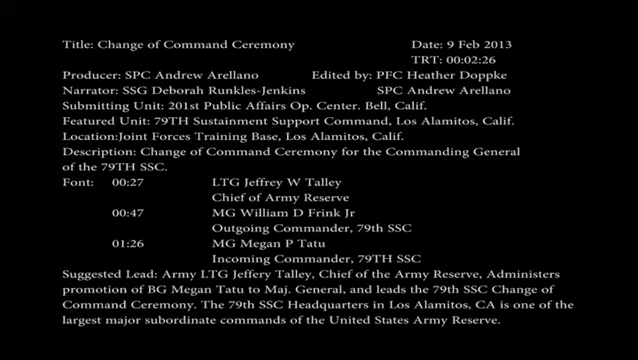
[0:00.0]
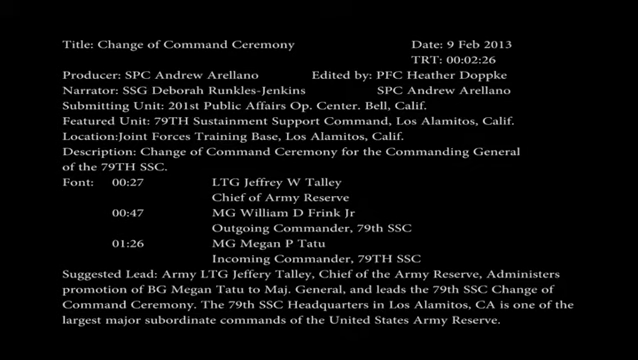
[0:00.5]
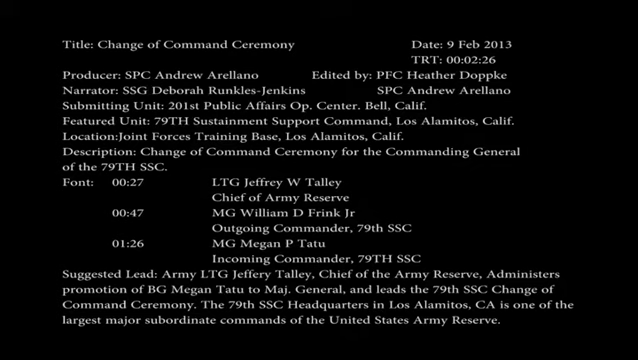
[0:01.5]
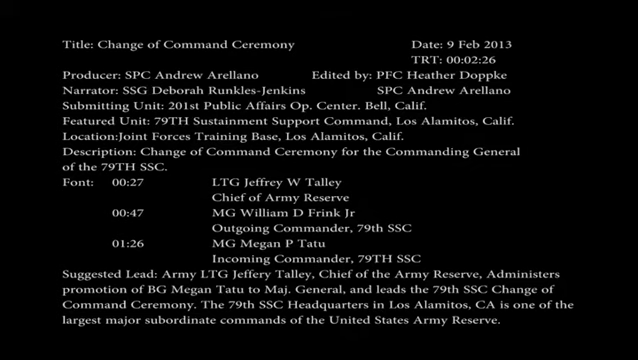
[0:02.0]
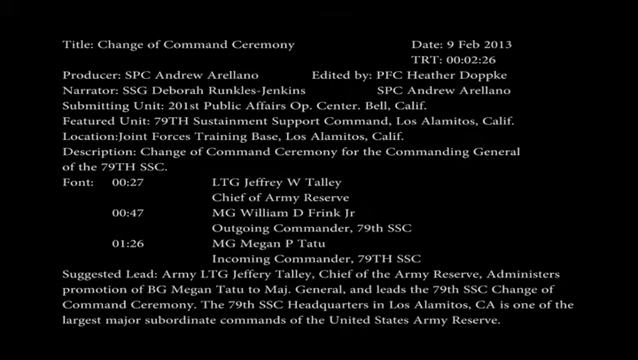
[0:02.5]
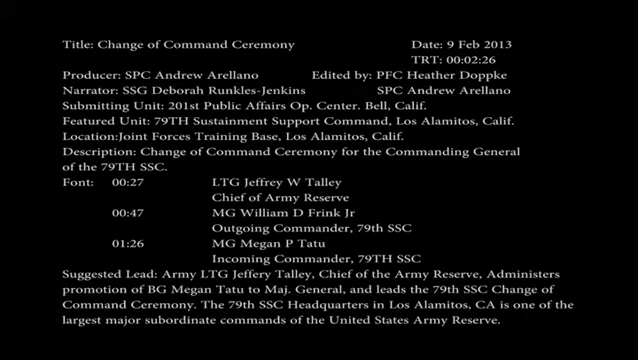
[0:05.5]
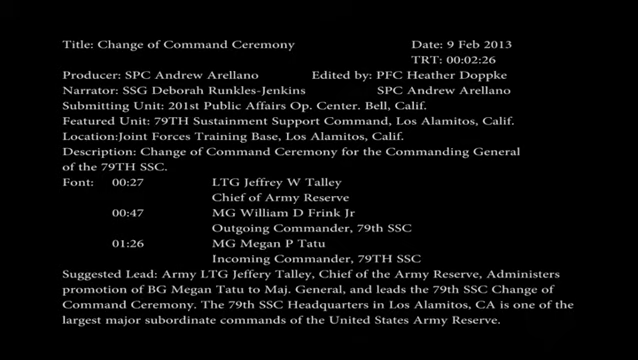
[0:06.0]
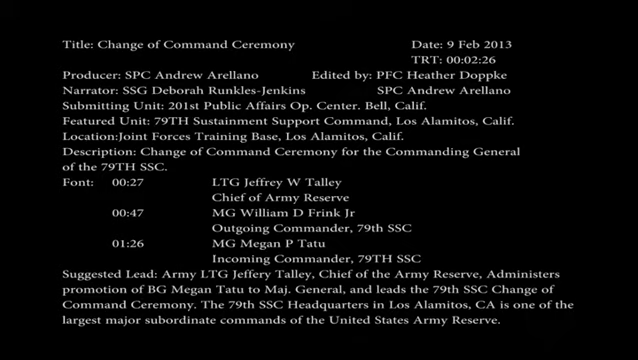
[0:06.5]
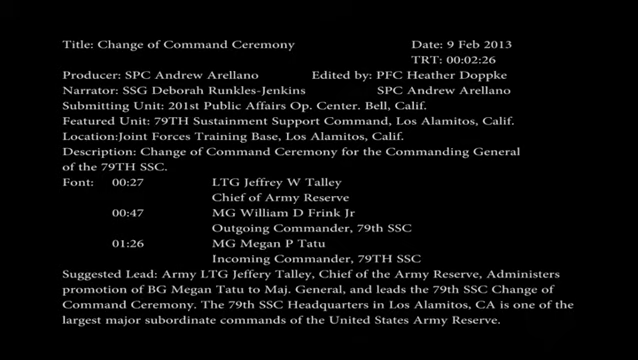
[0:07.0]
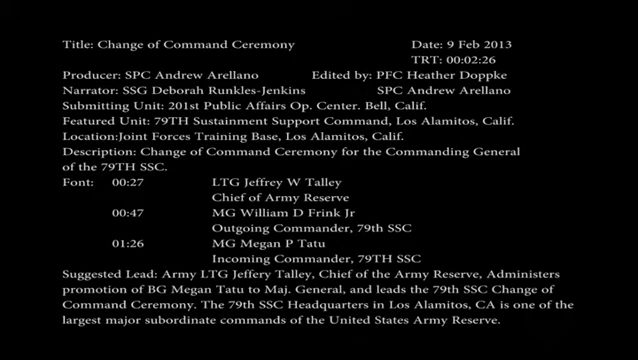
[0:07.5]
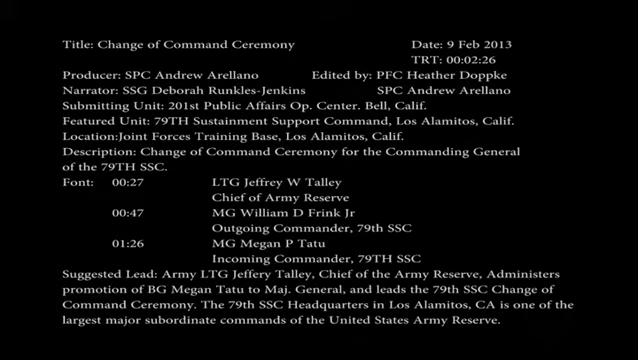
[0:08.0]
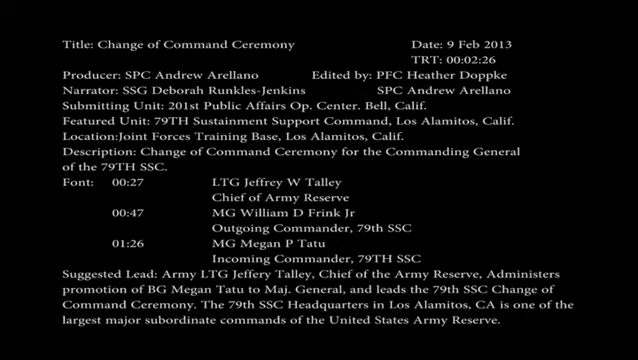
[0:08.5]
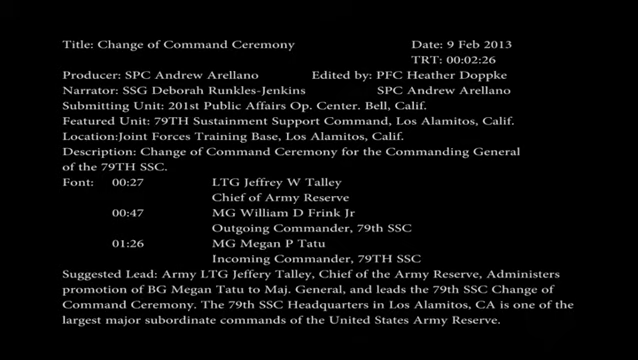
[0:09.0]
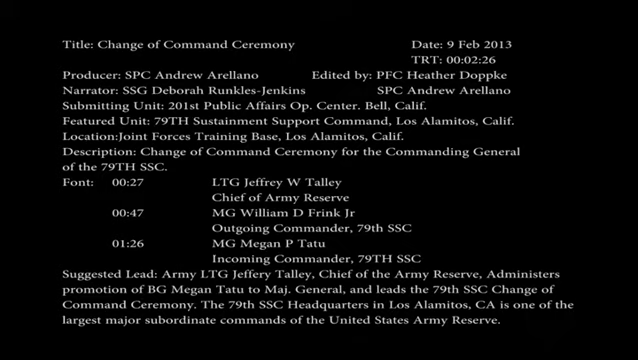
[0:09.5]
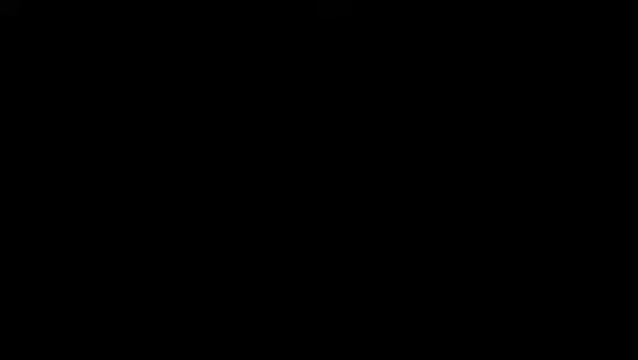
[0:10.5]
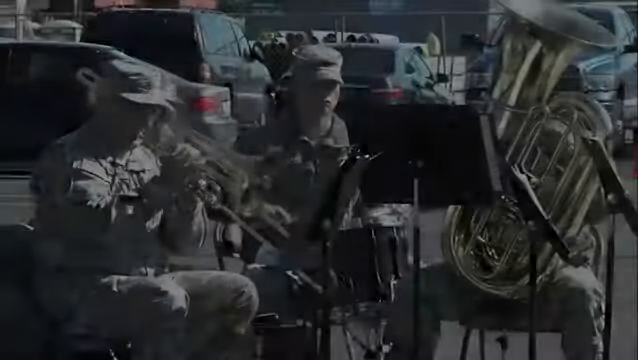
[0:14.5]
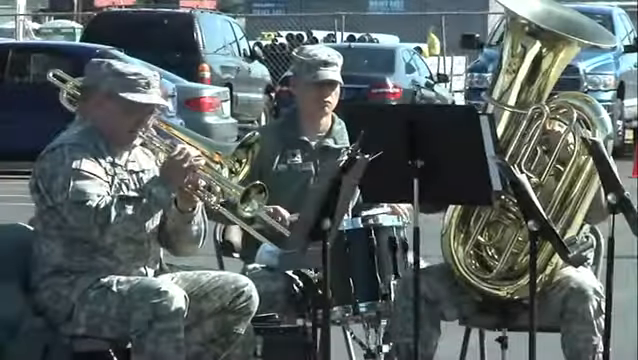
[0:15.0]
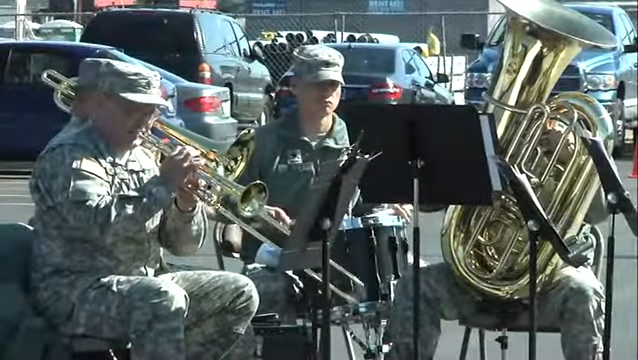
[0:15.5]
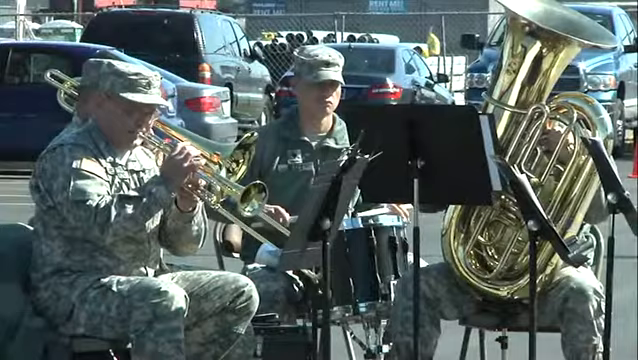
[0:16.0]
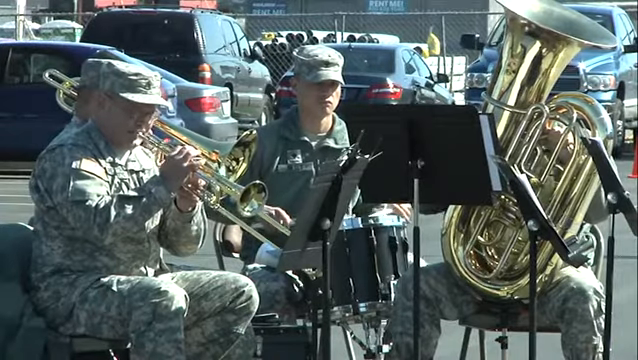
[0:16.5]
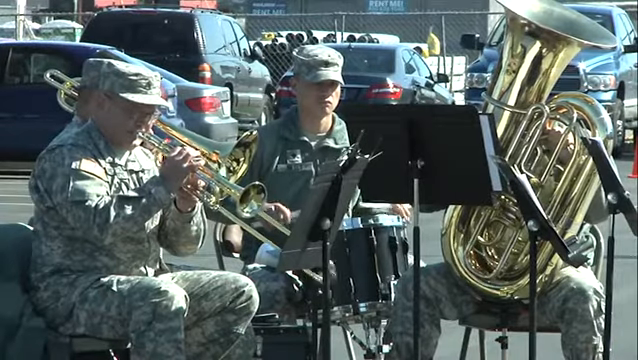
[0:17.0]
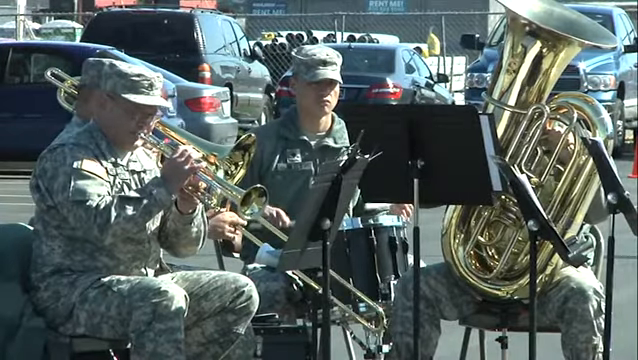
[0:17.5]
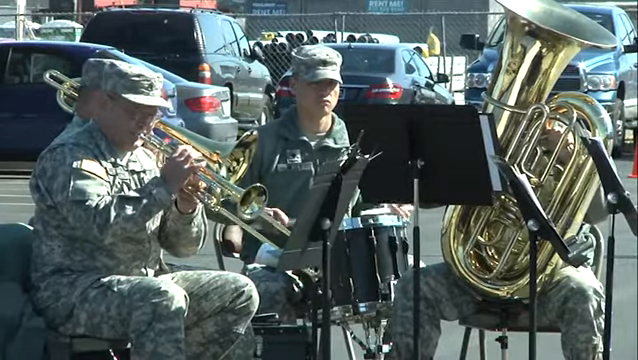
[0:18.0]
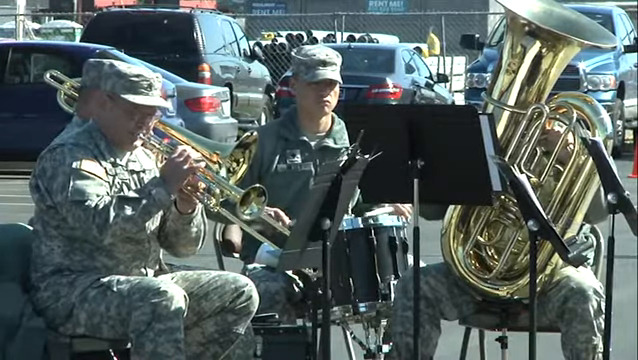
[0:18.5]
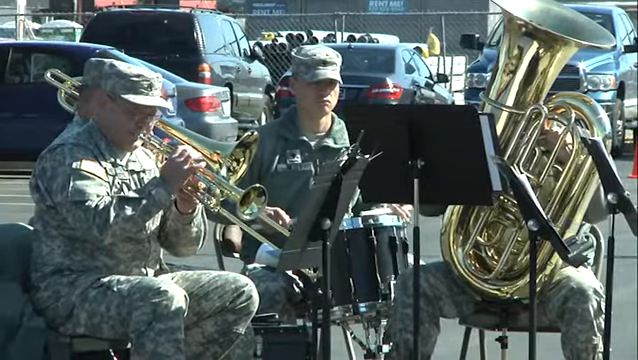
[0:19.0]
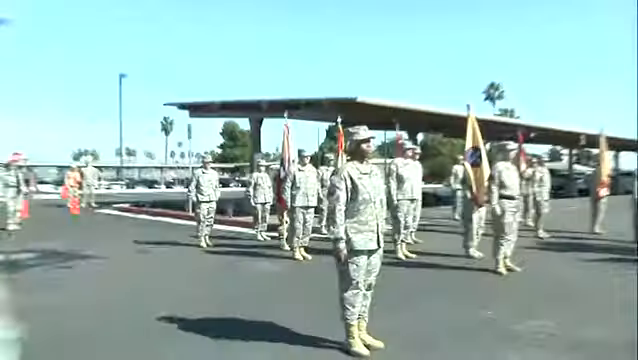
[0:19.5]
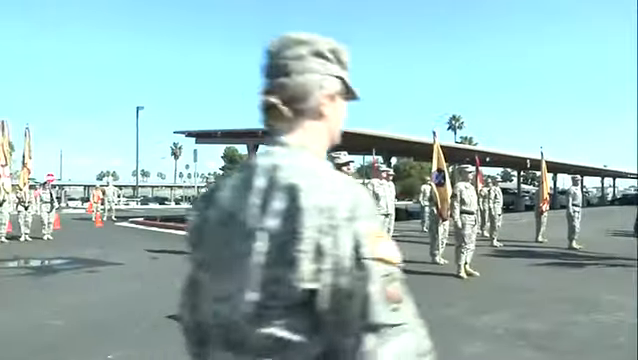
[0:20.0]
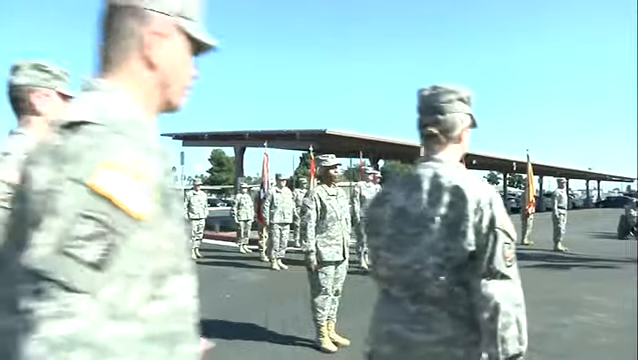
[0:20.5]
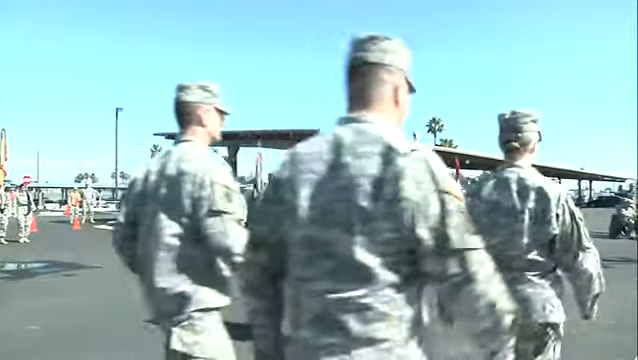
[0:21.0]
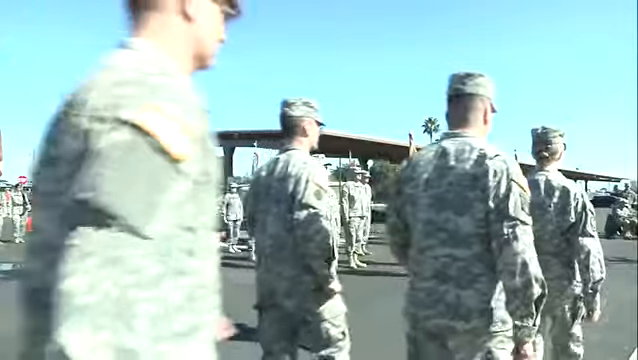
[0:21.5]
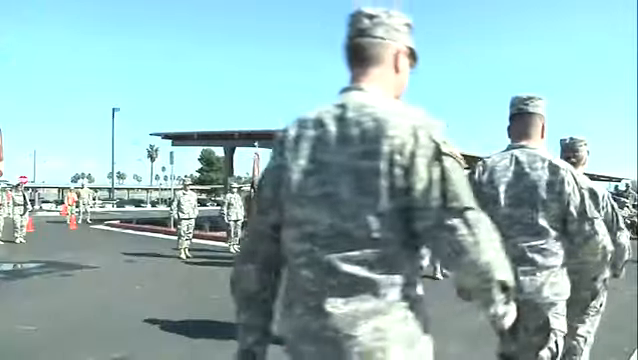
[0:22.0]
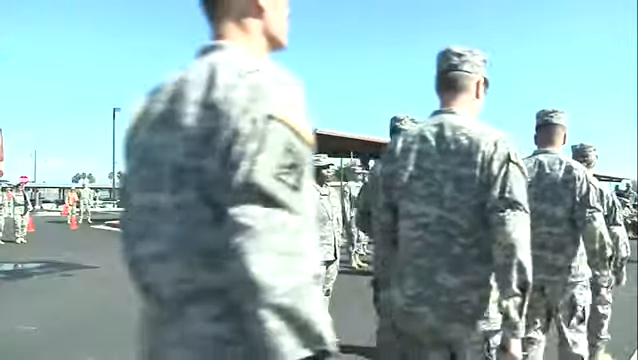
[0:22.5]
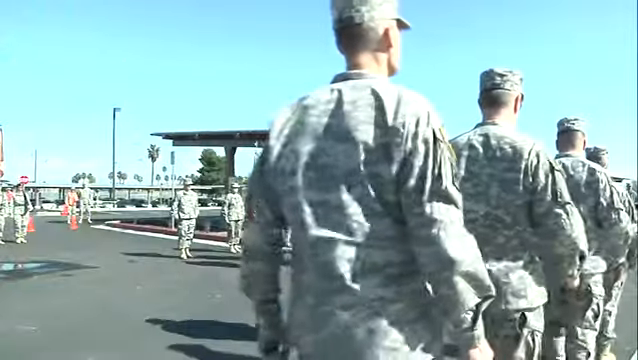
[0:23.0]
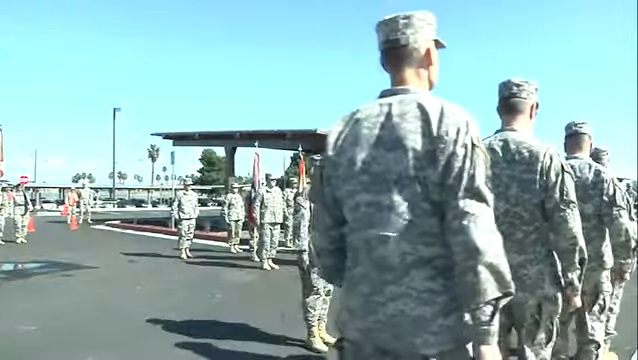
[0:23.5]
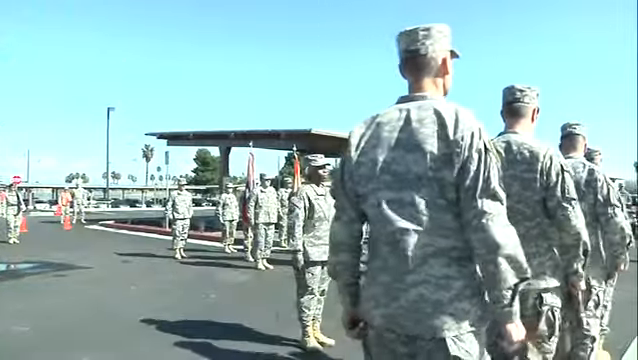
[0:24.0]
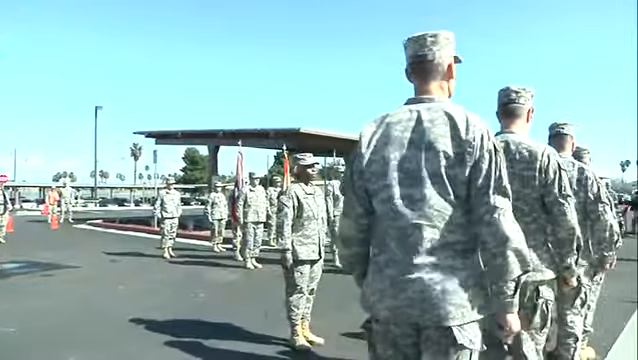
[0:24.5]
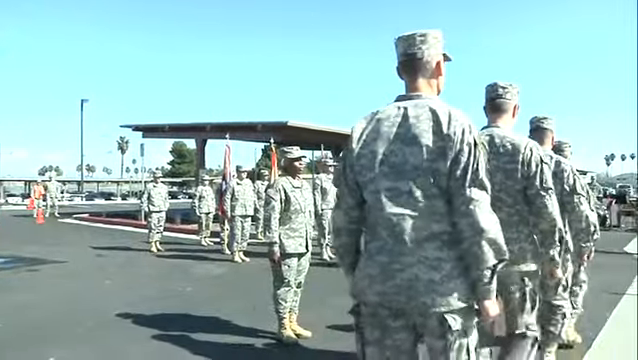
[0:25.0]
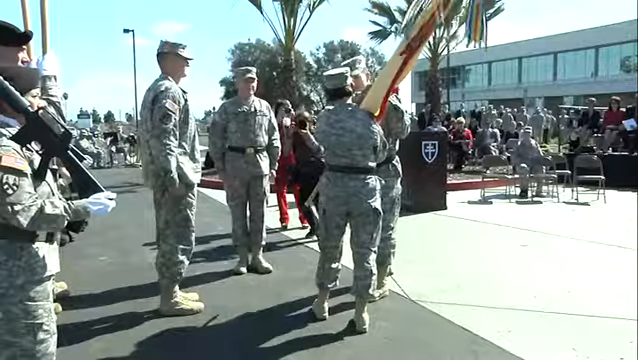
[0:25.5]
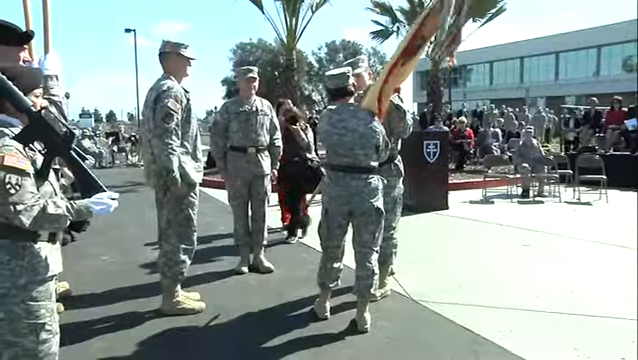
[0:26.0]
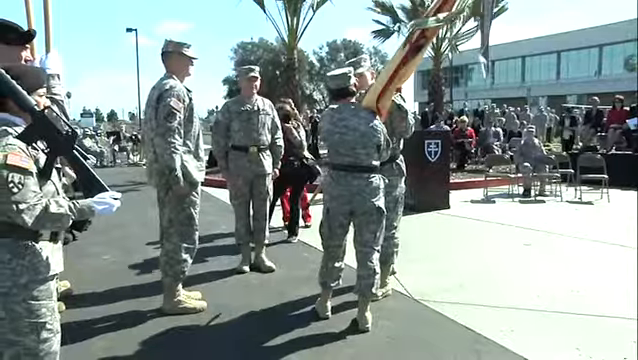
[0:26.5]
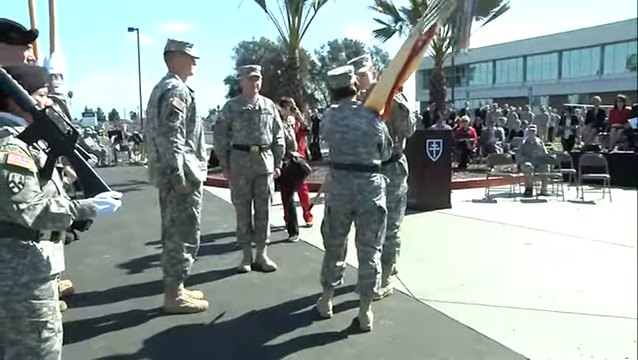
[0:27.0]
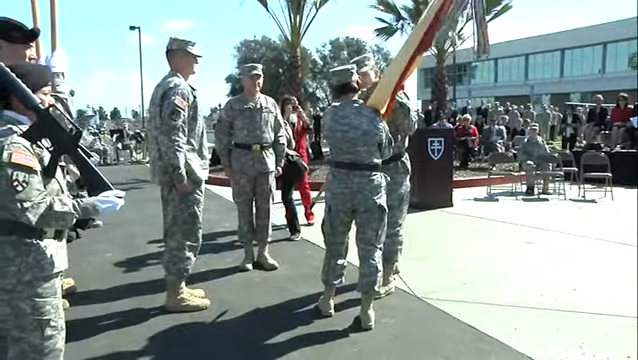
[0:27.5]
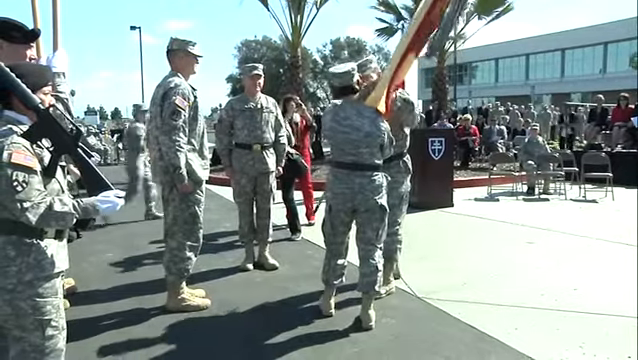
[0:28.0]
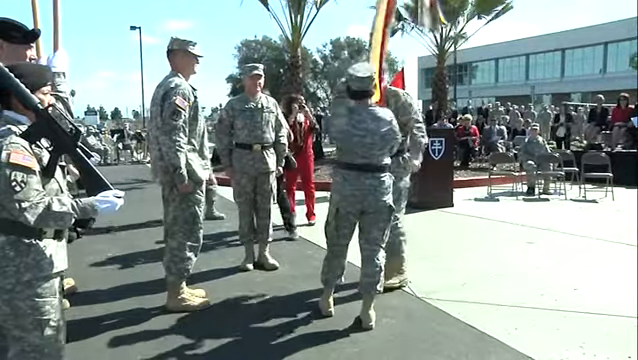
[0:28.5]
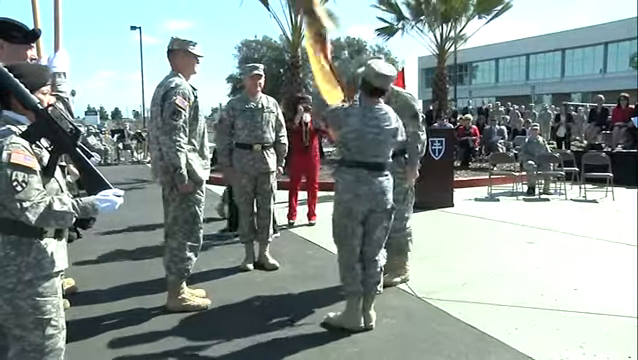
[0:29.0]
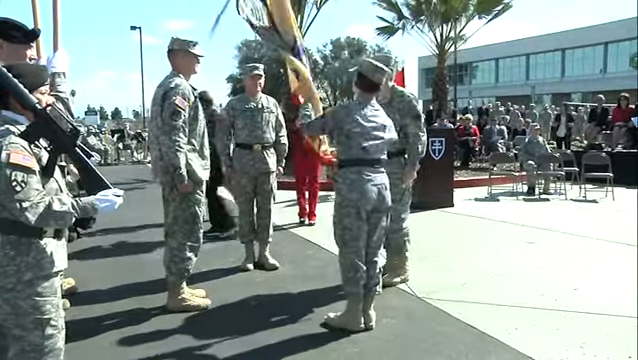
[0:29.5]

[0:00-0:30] Outdoors, on the left side of the screen, a man in camo pants, a camo shirt and a hat, which looks like a military uniform, sits playing the trumpet. Behind him, over his left shoulder, another person plays a trombone. To his right is a person wearing a green hat and a green shirt with a black drum in front of him, hitting the drum with drumsticks. To that person's right, a man sits in a chair with a tuba on his lap, playing. Black music stands are in front of each of them. They appear to be playing in a parking lot, and four parked cars are visible in the background. The video cuts to a group of people in military uniforms standing at attention while other people in uniforms march into frame in front of them. Then a man in a military uniform of camo pants, shirt and hat hands a big folded flag, pink and orange, to a woman who is seen only from behind.